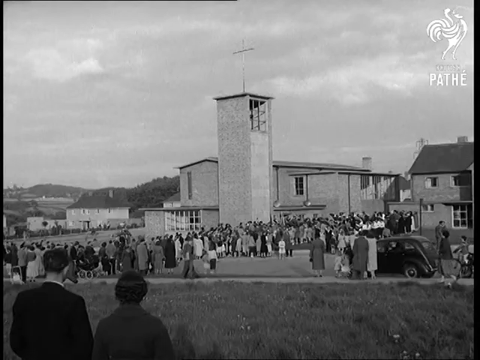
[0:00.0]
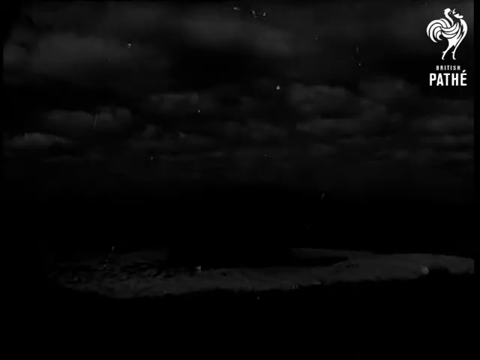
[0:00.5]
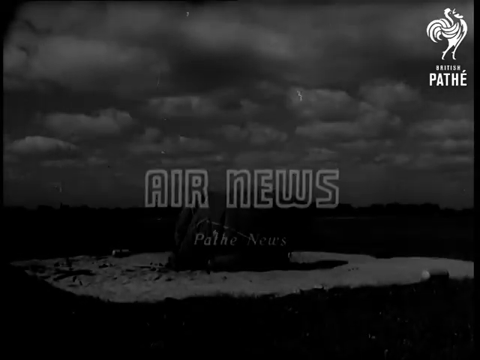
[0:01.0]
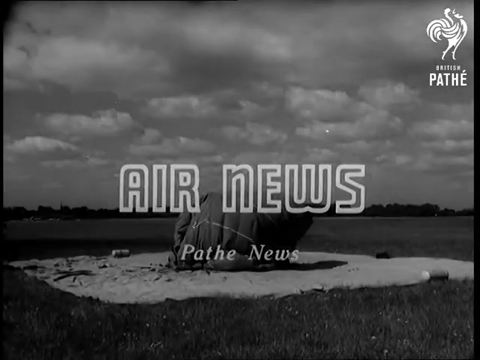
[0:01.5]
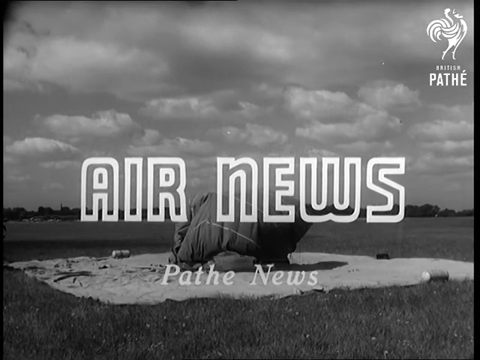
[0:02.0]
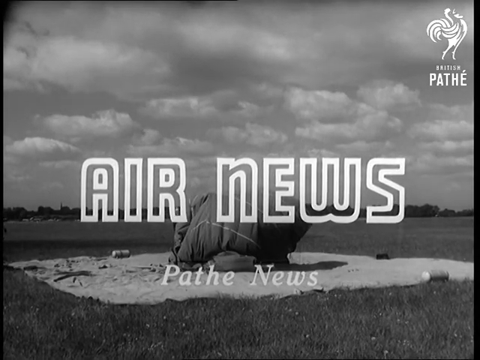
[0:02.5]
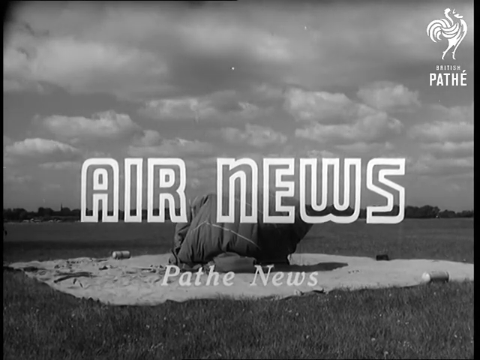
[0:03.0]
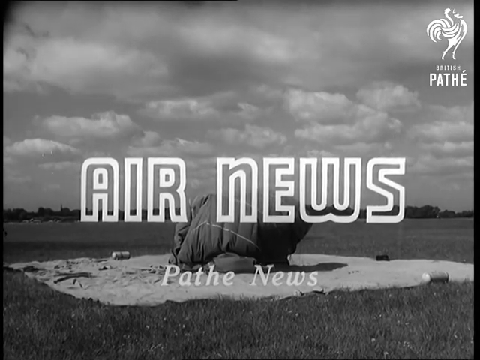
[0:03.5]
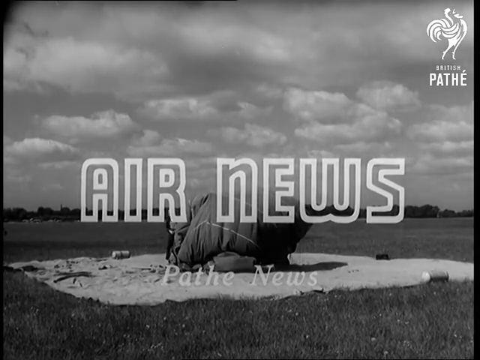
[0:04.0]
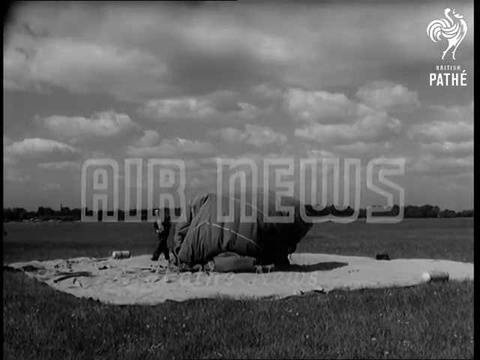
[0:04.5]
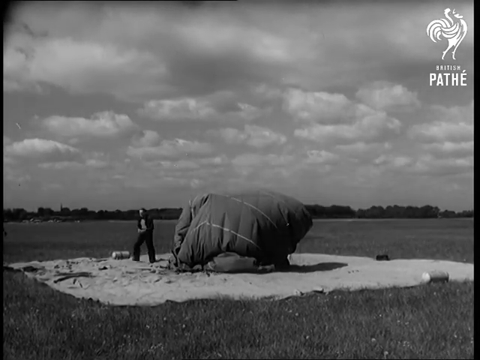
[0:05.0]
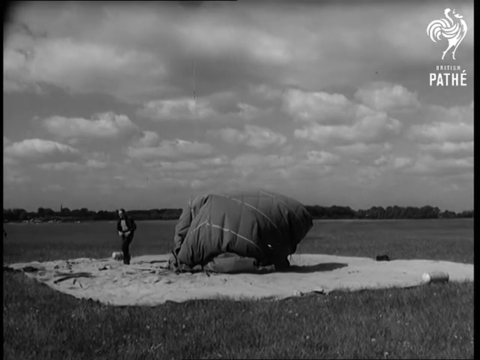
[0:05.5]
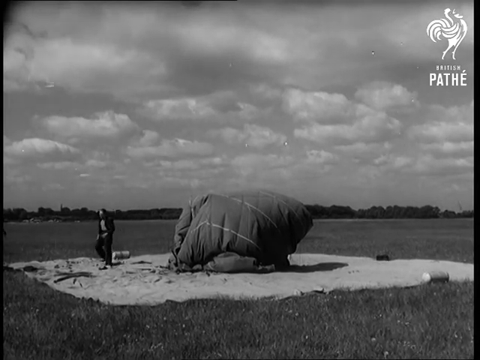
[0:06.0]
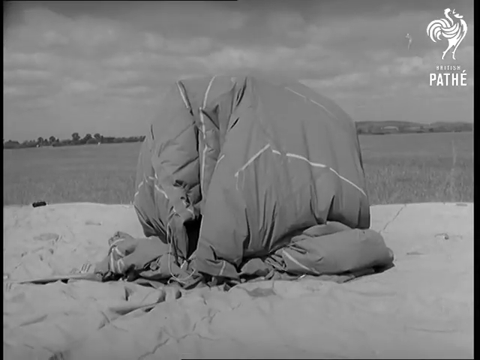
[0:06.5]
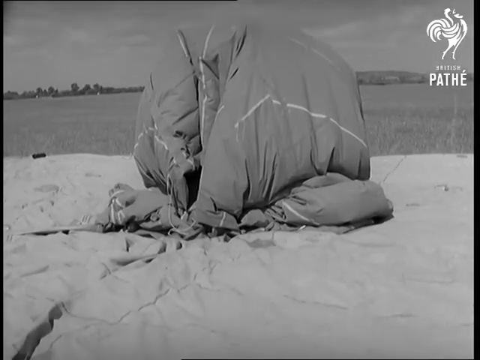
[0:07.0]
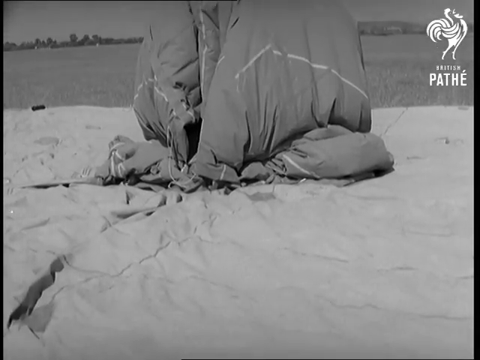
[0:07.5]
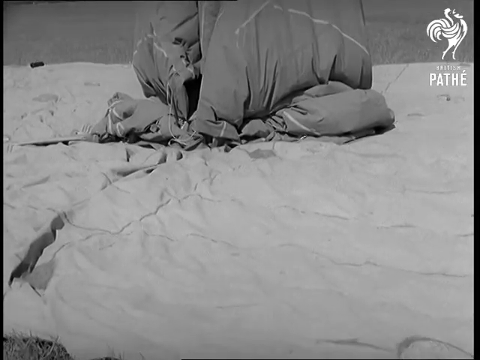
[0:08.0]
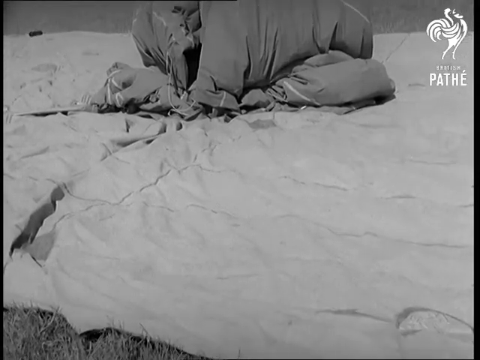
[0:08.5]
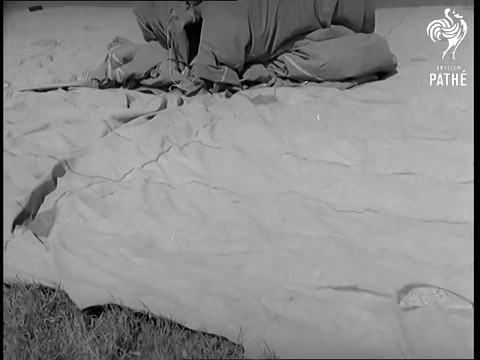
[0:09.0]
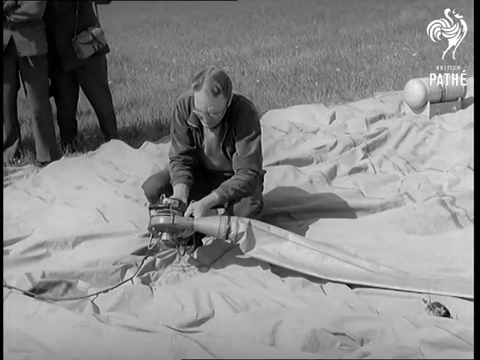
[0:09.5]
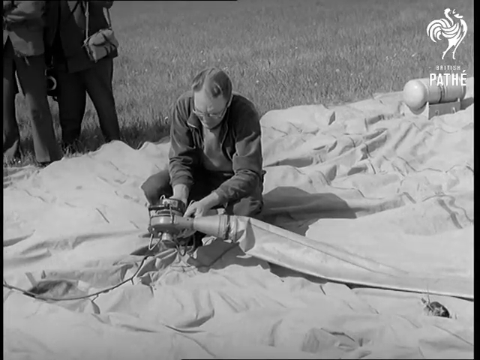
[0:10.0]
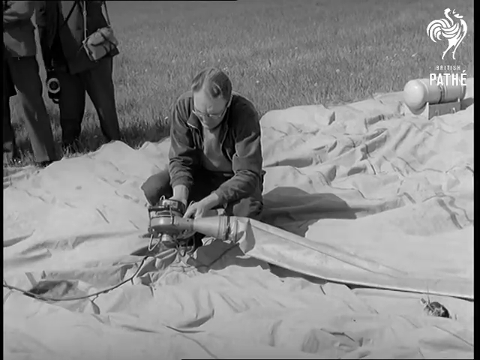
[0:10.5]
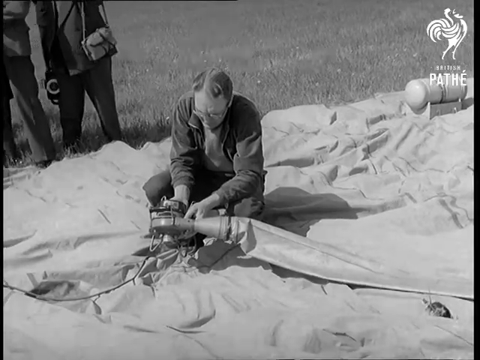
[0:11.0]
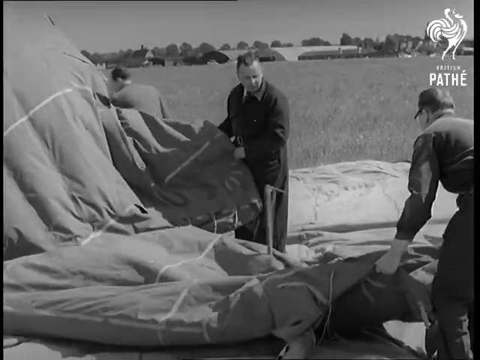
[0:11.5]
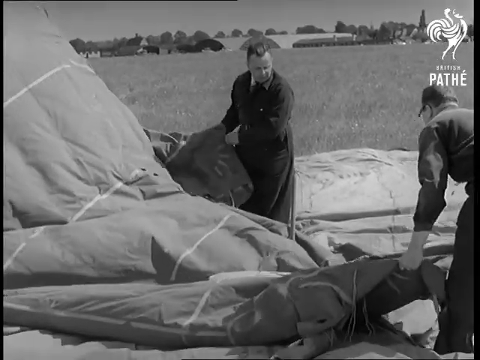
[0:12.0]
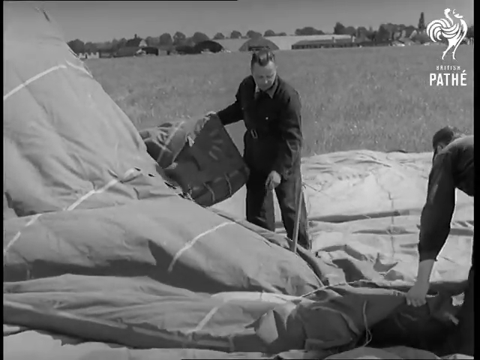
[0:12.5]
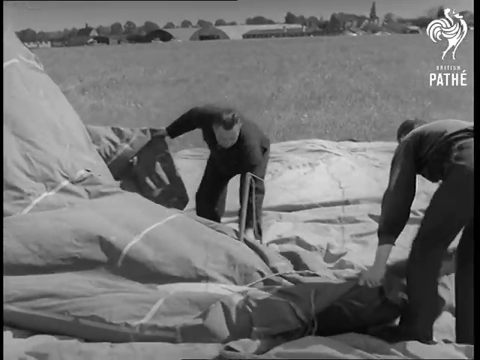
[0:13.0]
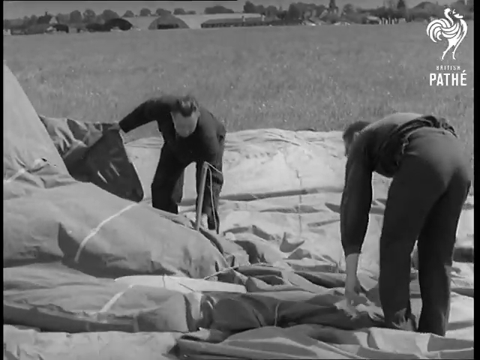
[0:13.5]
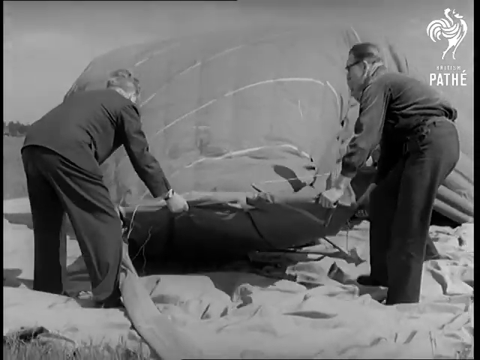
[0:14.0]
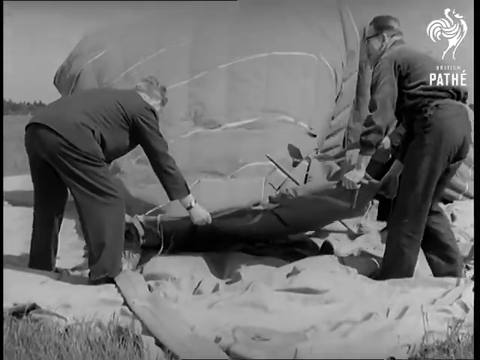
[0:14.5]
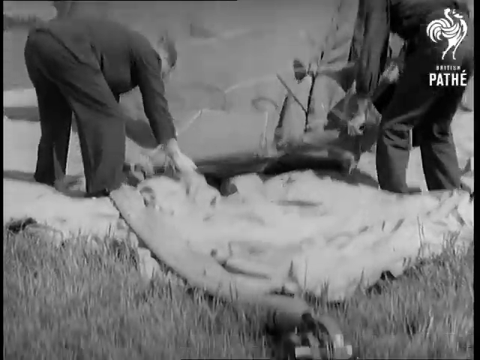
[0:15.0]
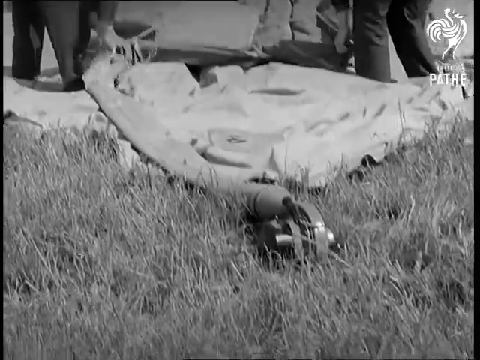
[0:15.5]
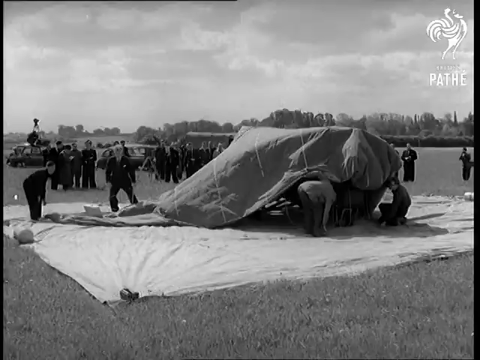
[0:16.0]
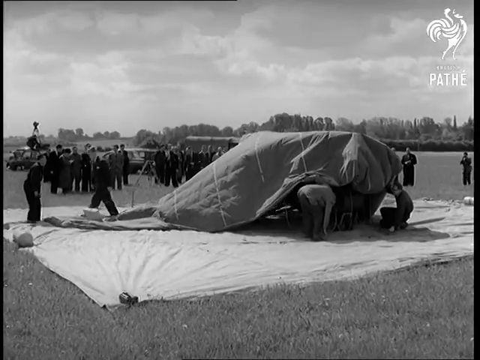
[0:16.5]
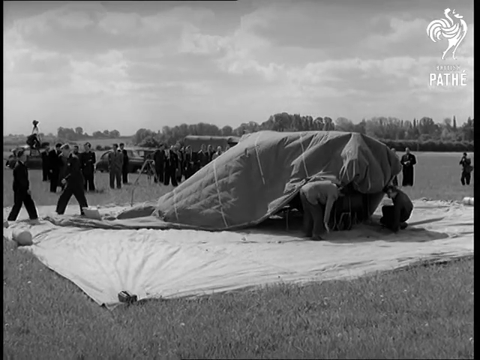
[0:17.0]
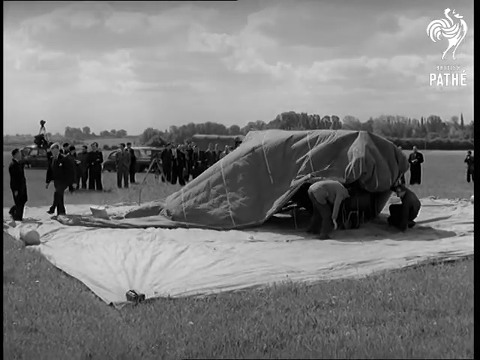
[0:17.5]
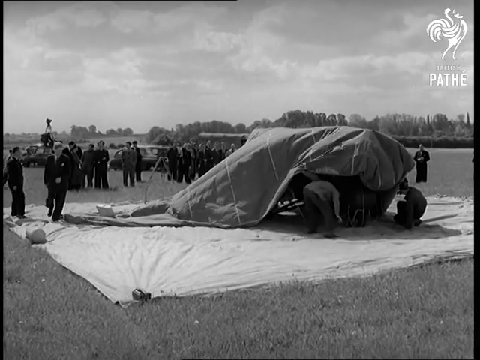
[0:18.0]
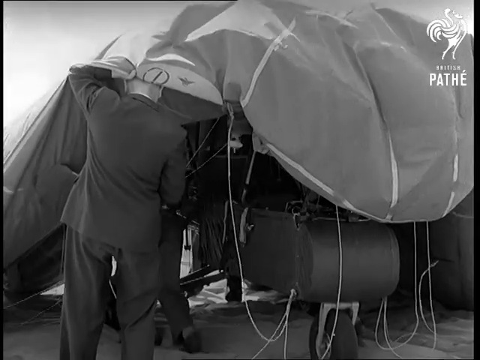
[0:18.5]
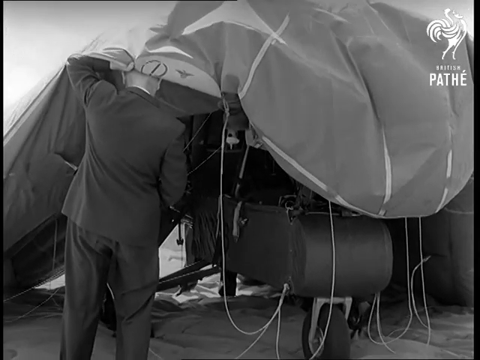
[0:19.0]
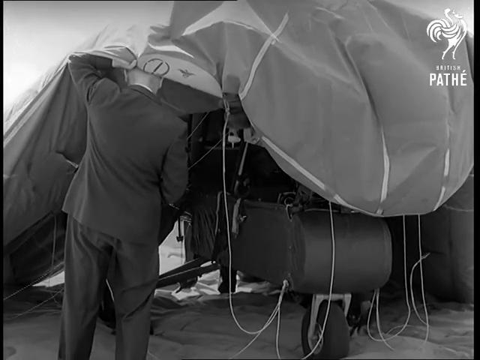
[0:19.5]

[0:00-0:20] The video opens in black and white, with a watermark logo in the upper right corner: an illustration of a rooster with text beneath it. The first line of the text cannot be read, and the second line is "Pathé", with an accent over the e. A title overlaid in the center reads "air news", and below it "Pathé news". A man emerges from behind an irregular-shaped object covered by fabric. The object is taller than the man, so over six feet, and a little wider than it is tall, maybe eight feet wide. It is set on a square tarp over the field. In the background there is a horizon, a tree, and a sky filled with puffy clouds. A close-up shows the object in the center, which could be an odd-shaped tent. A man is hunched over, wearing glasses and a sweat jacket. Two other people stand to the left, shown only from the chest to the feet; they wear suits, and one carries some kind of handbag, possibly a case. The man squatting on the fabric on the field holds some kind of contraption, possibly an air compressor, since a hose is connected to its end and extends to the right. Two men pull the fabric that was in the center, which could be some kind of hot air balloon. There are four men on the fabric covering the grass, while in the background rows of people are gathered.